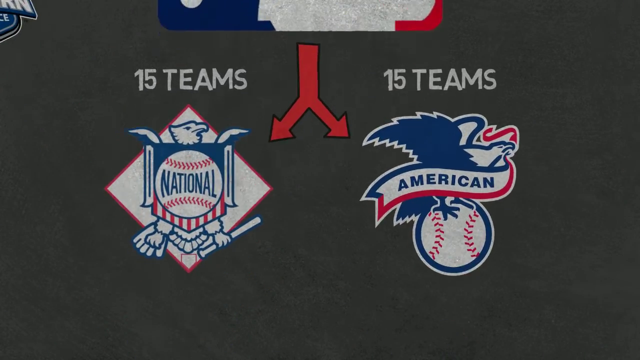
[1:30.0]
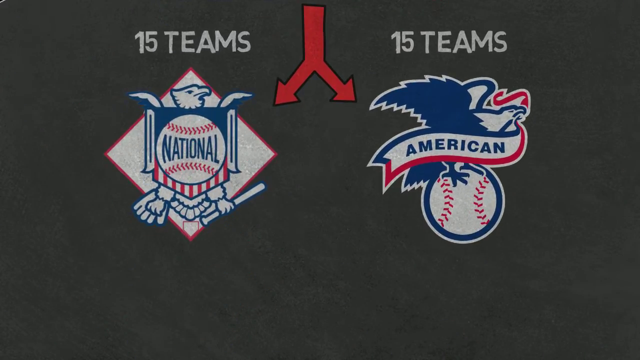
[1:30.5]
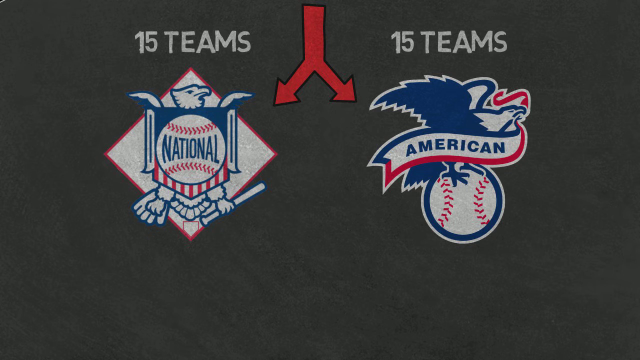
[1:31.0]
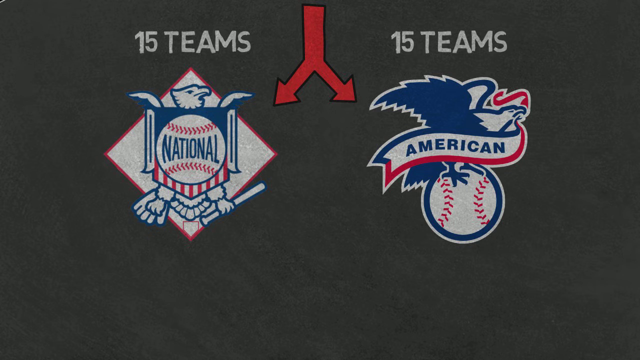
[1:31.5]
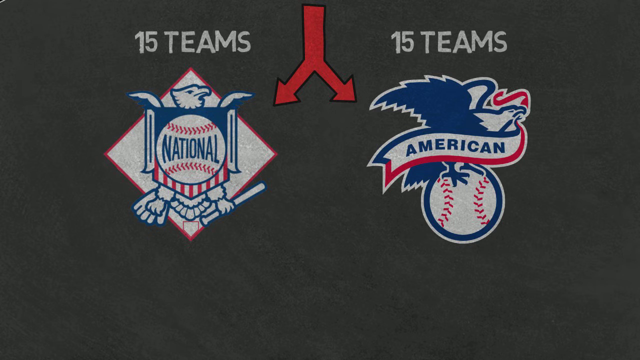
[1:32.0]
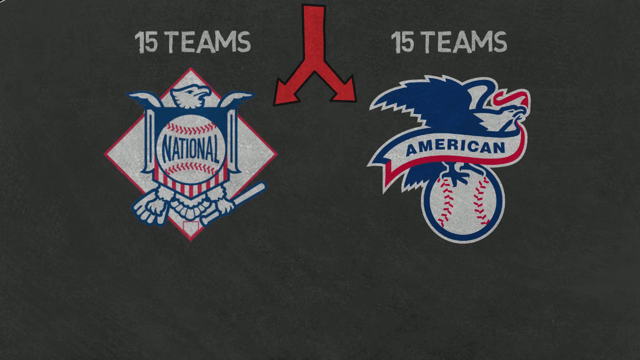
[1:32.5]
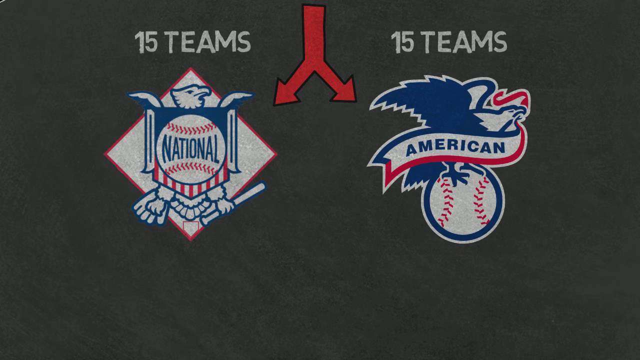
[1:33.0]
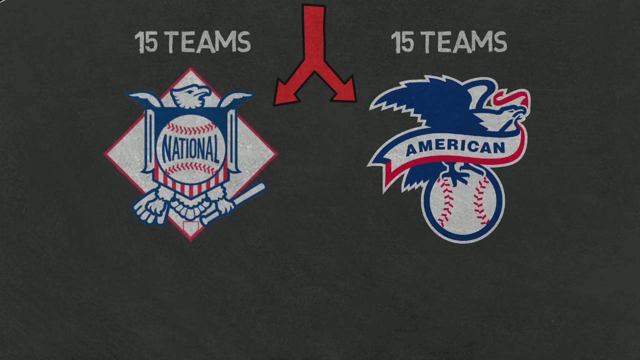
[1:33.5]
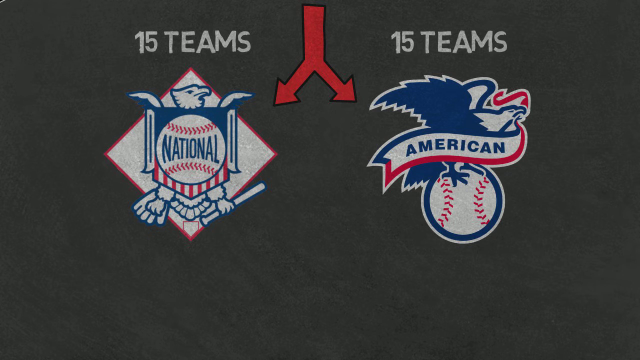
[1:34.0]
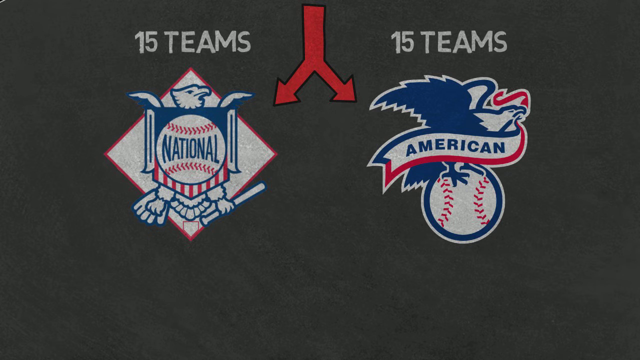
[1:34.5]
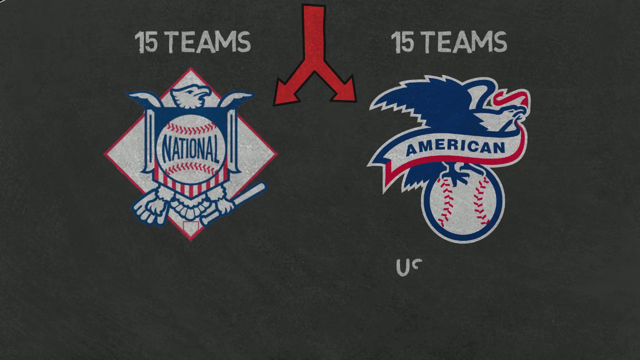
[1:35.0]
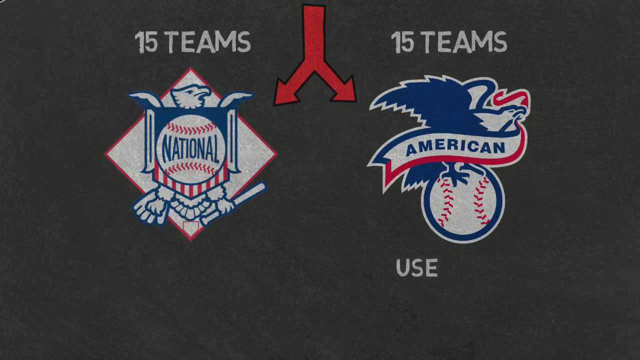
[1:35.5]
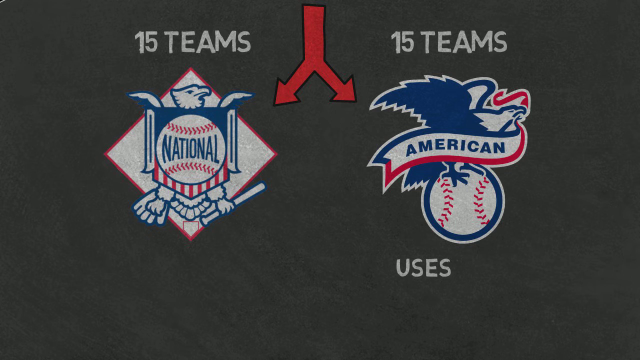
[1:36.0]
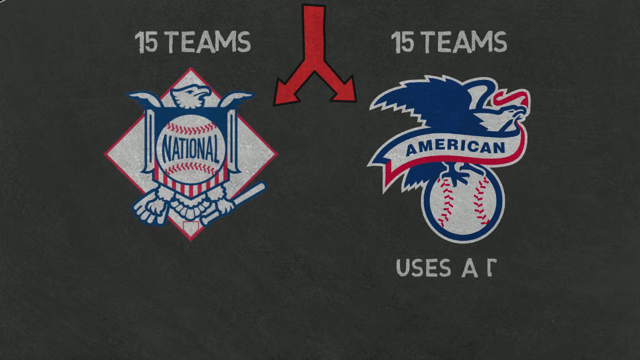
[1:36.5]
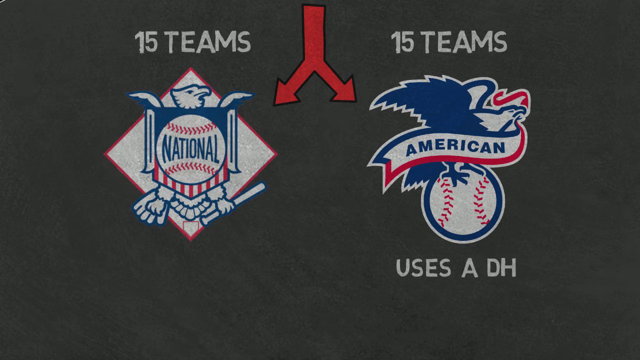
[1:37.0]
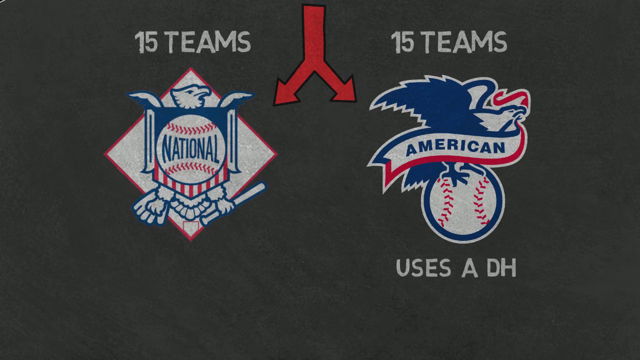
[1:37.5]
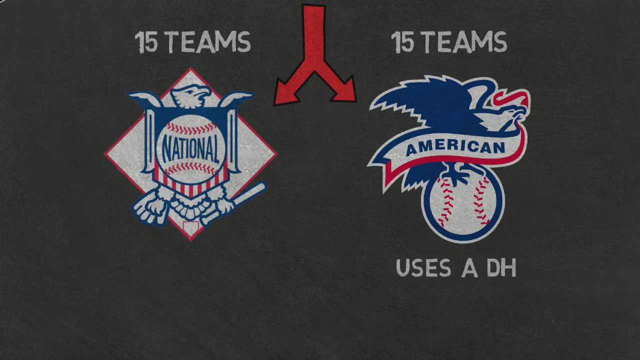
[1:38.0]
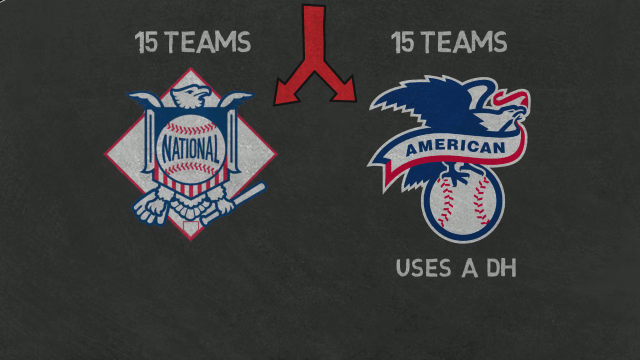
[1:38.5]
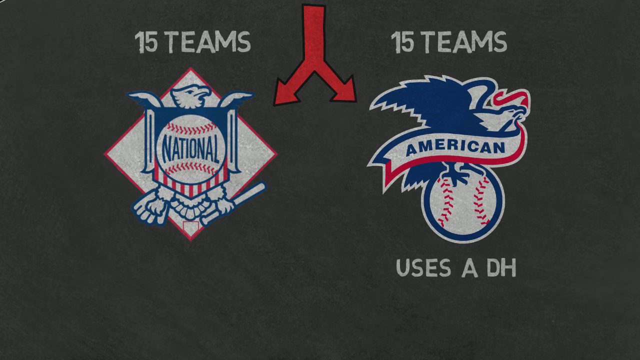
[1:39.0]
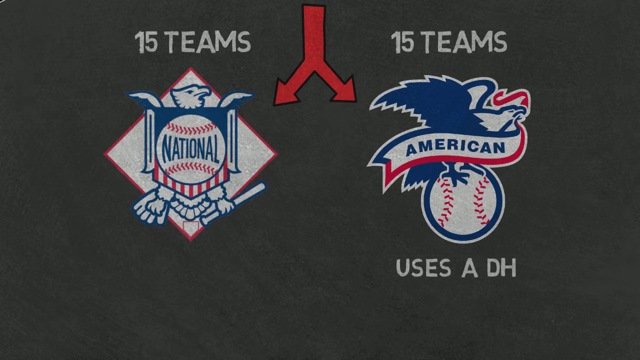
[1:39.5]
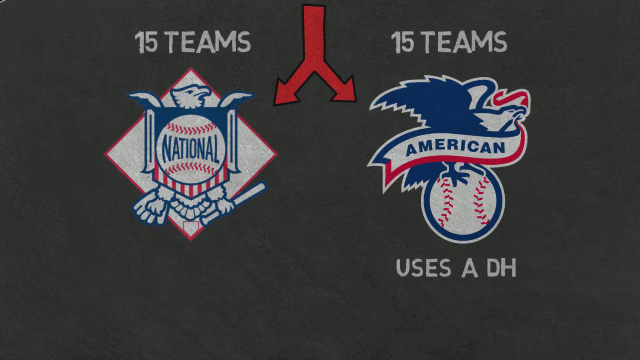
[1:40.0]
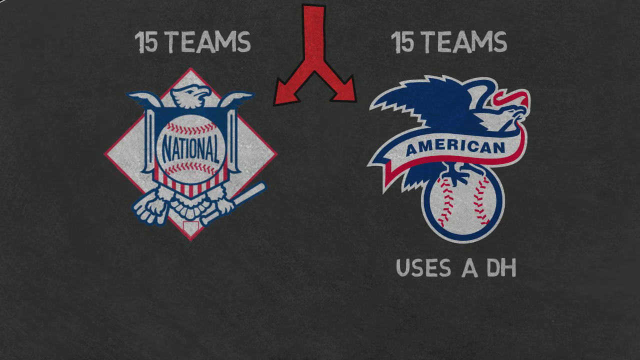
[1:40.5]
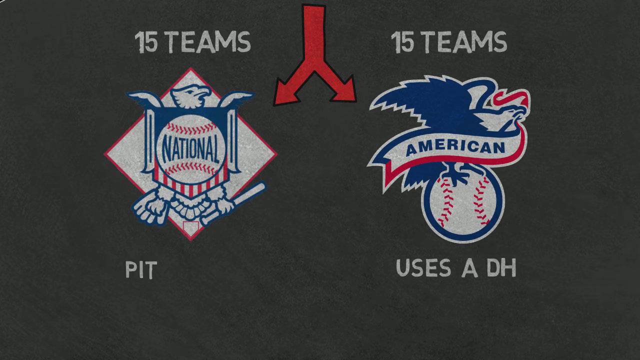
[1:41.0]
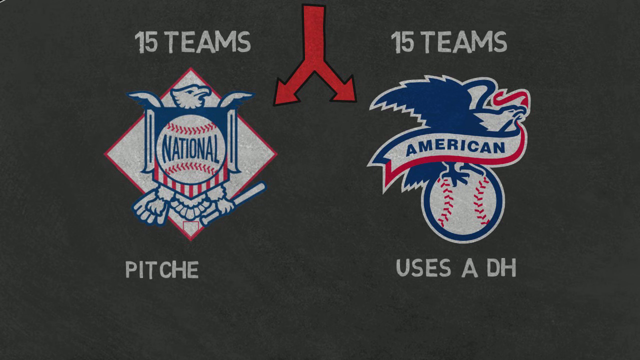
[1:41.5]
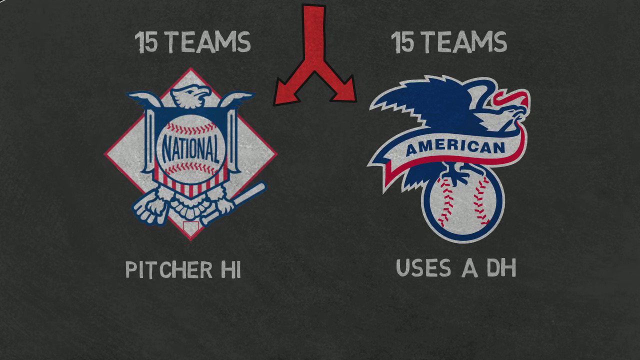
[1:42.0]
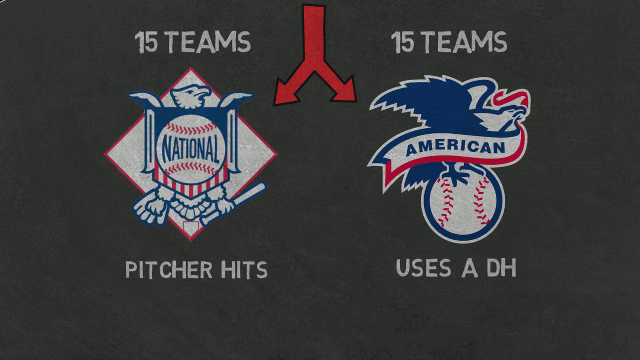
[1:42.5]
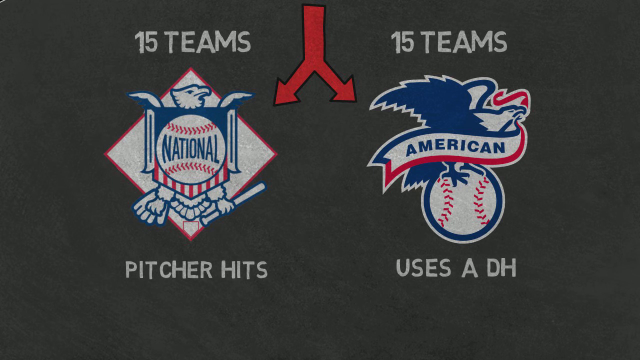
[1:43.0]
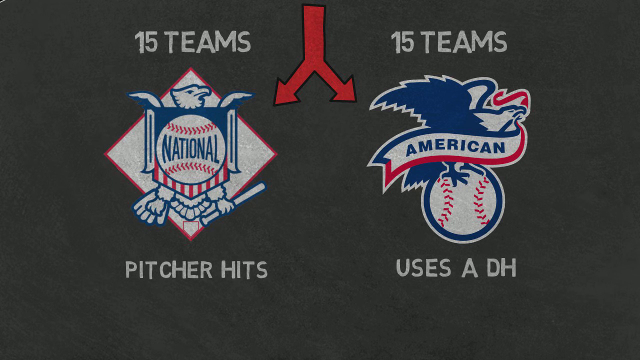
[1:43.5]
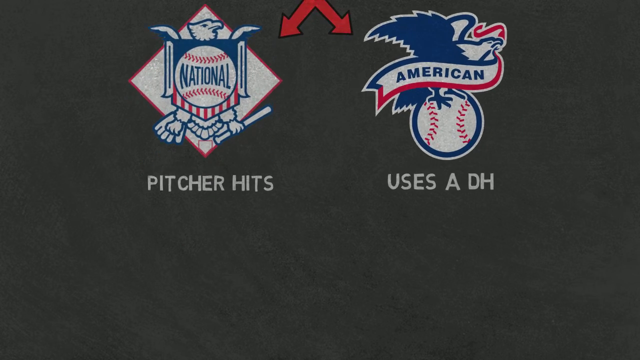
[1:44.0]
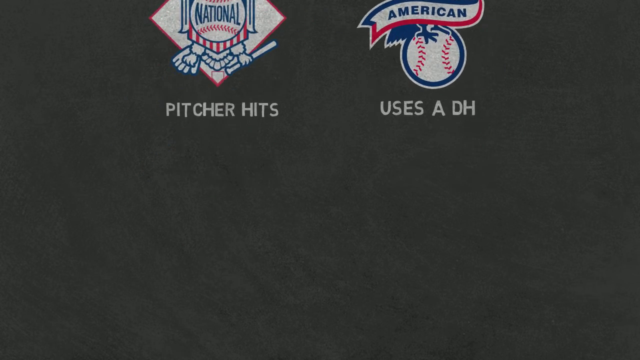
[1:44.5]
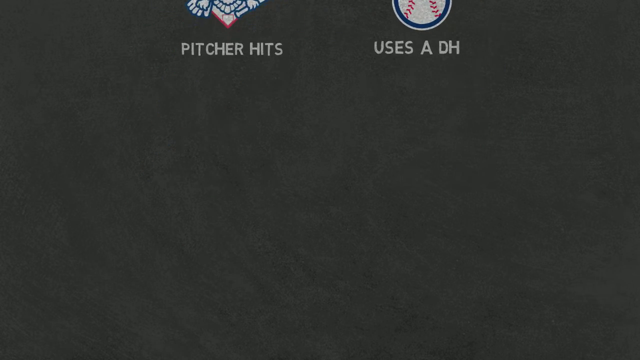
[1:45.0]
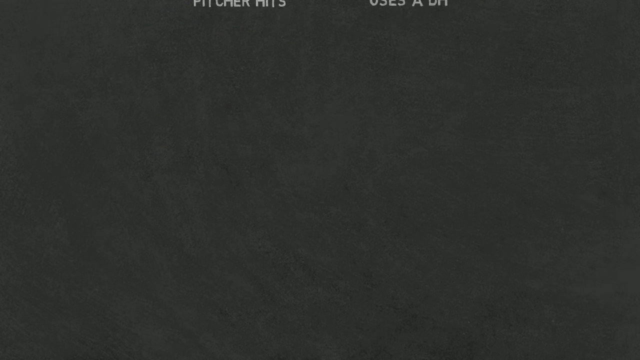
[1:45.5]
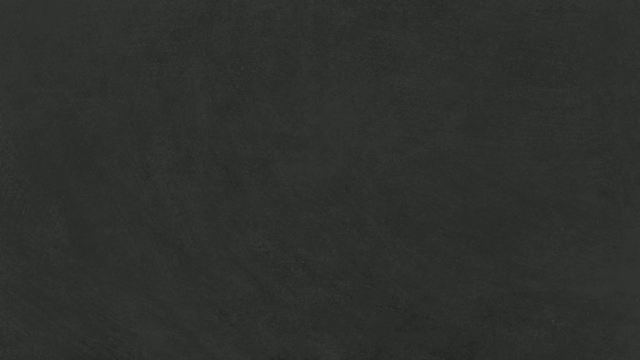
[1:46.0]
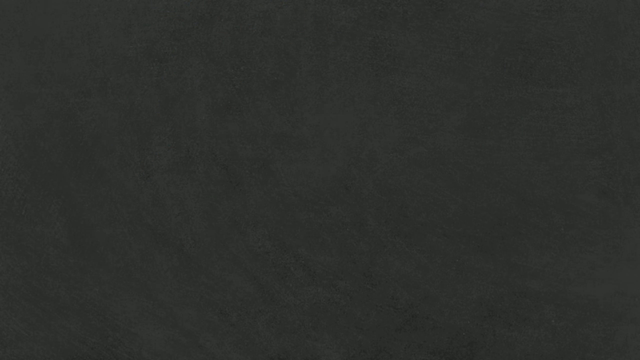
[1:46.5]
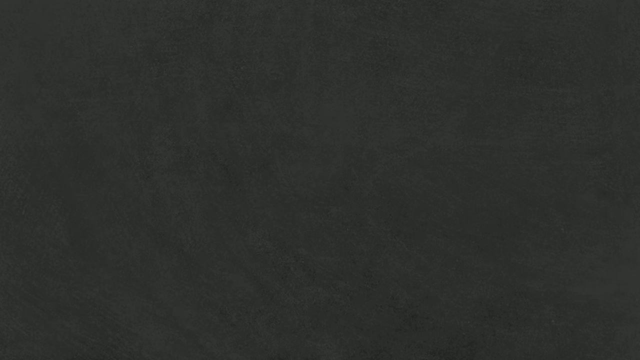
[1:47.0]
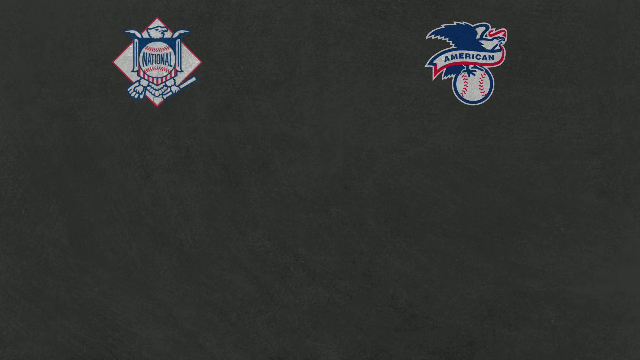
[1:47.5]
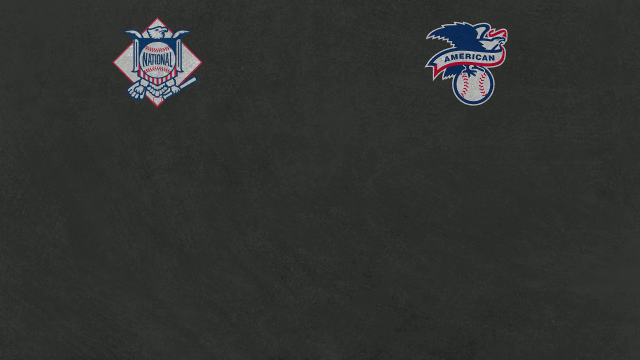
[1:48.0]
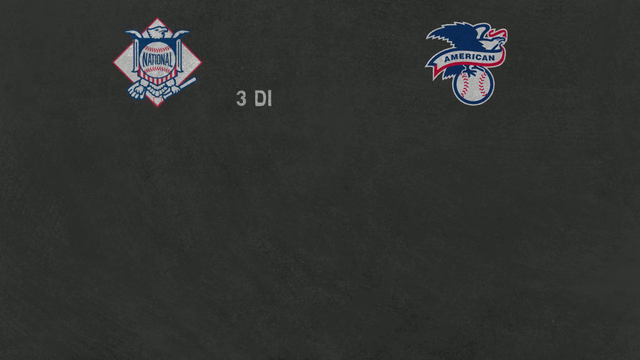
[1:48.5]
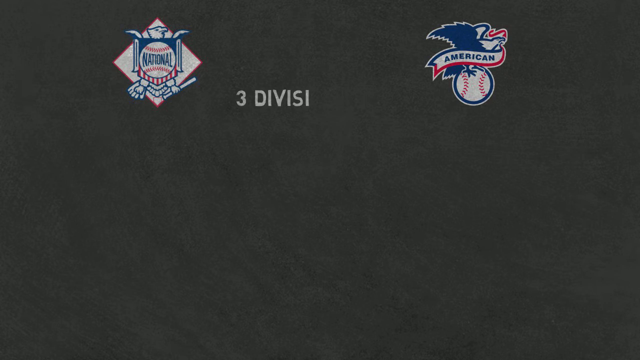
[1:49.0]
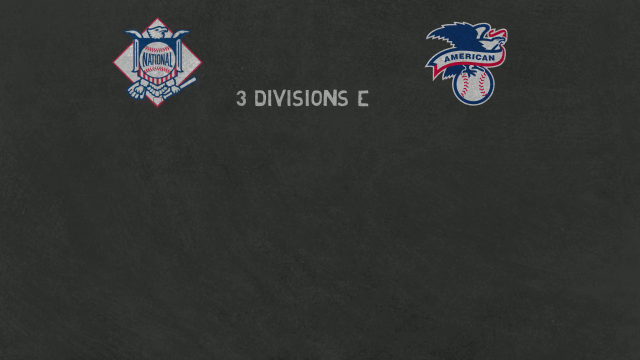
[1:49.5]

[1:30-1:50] The view returns to the MLB image with the red branching arrow splitting perfectly down the middle into National and American, then zooms in on the two logos. Under the American logo on the right, "uses a D-H" is slowly written in a chalky font, and under the National logo on the left, "Picture Hits" is written. The view zooms out toward the bottom of the logos, where both logos suddenly reappear, and text in the center reads "three divisions each" before it quickly cuts away. Everything has a gray background, and the logos have blue and red highlights with white coloring in the background.